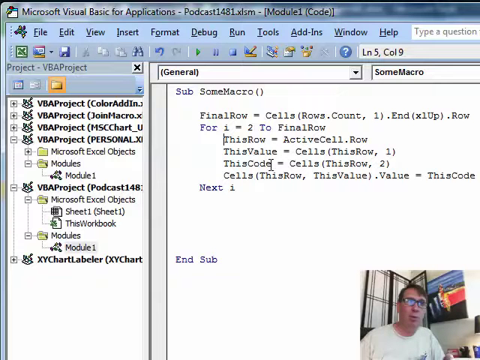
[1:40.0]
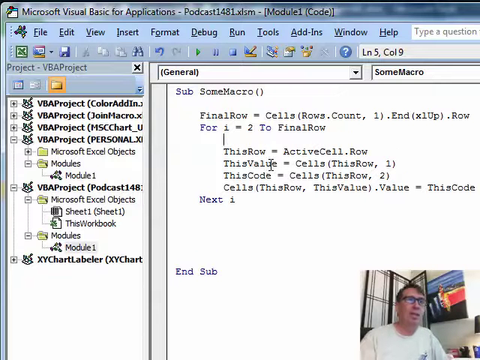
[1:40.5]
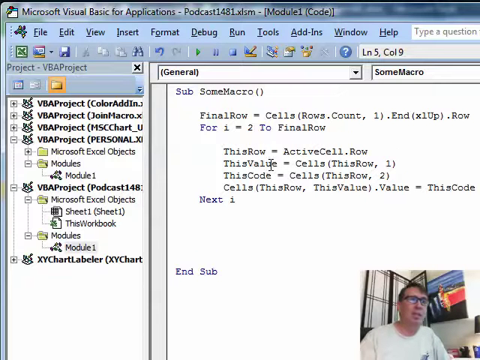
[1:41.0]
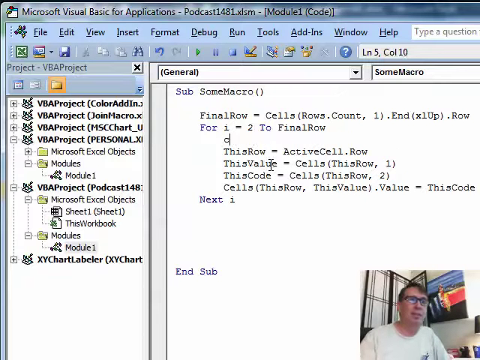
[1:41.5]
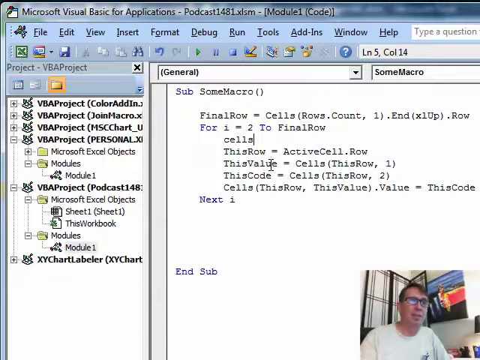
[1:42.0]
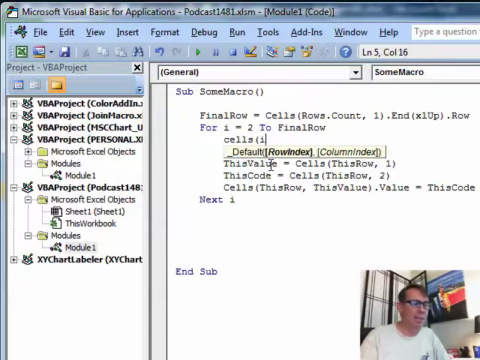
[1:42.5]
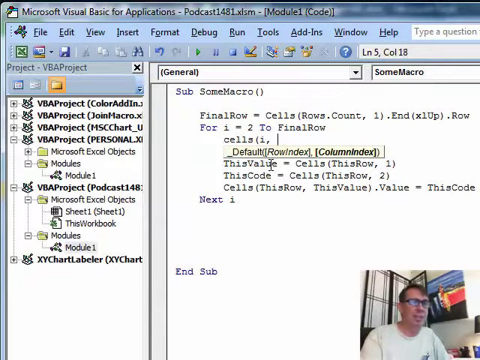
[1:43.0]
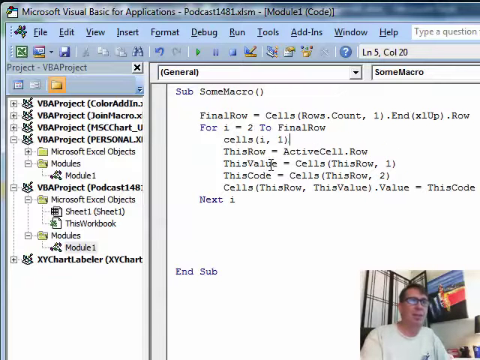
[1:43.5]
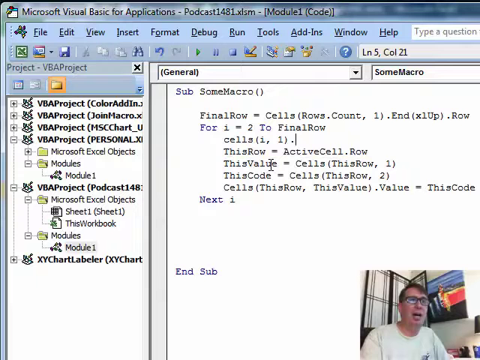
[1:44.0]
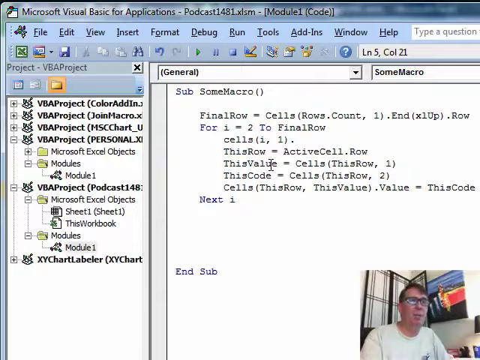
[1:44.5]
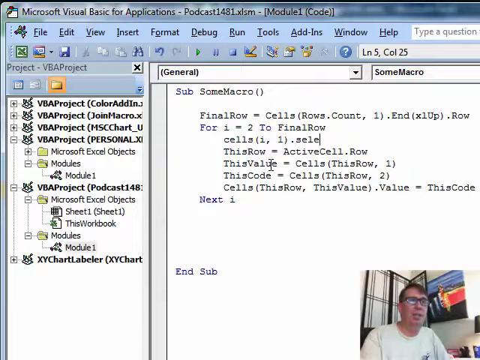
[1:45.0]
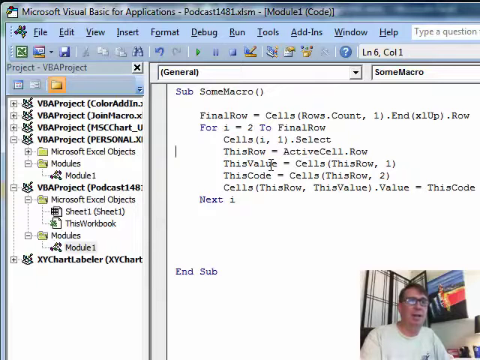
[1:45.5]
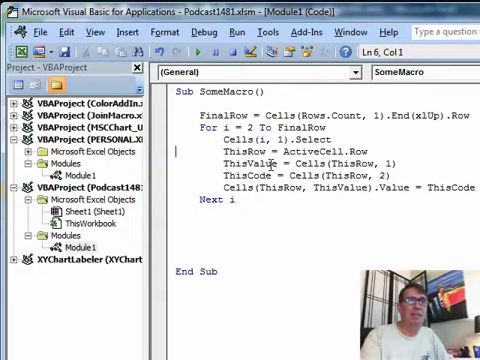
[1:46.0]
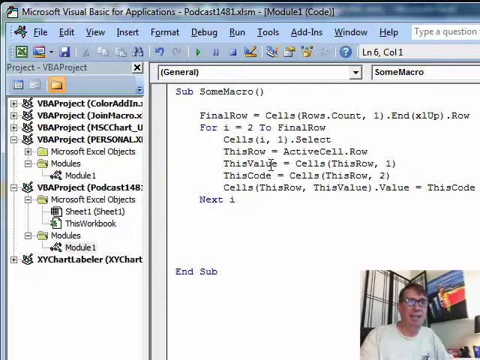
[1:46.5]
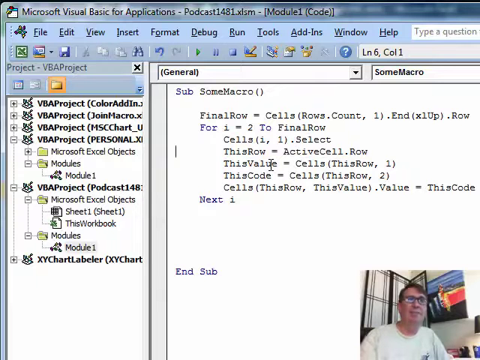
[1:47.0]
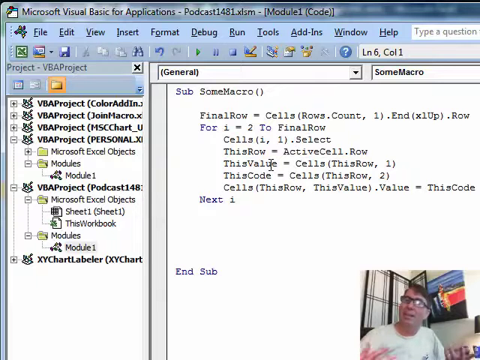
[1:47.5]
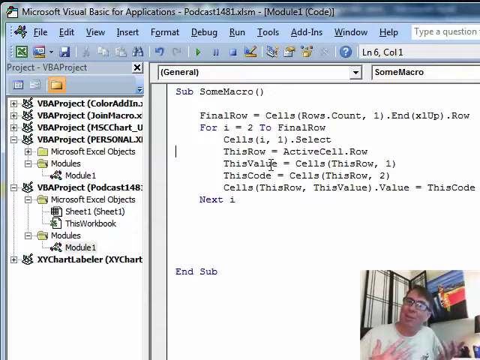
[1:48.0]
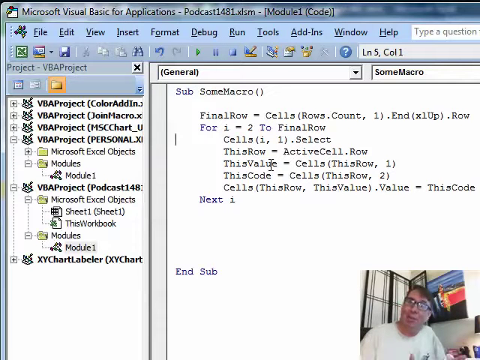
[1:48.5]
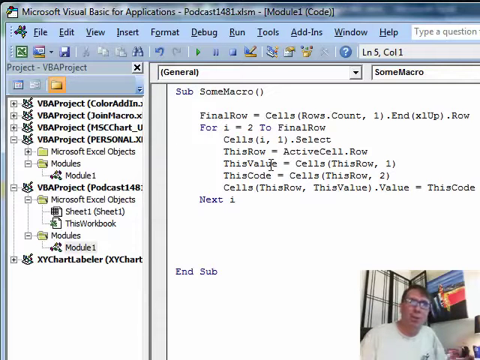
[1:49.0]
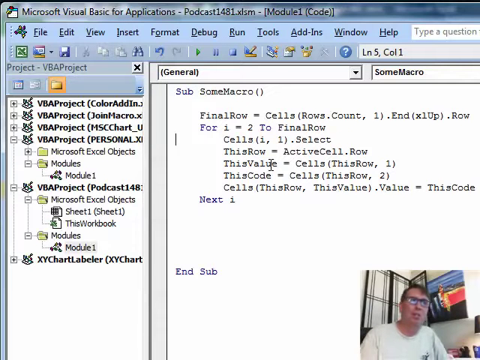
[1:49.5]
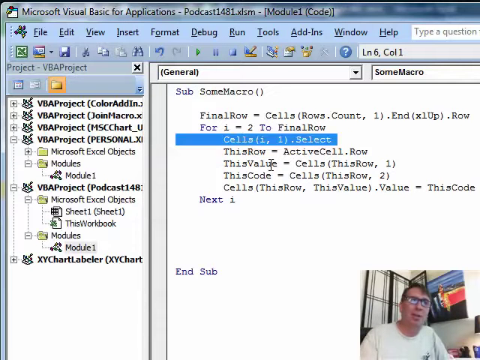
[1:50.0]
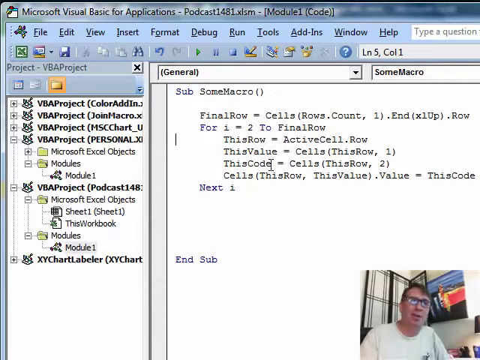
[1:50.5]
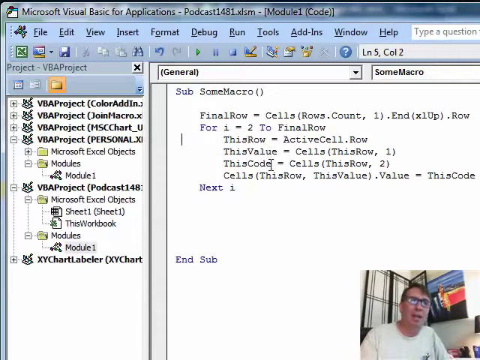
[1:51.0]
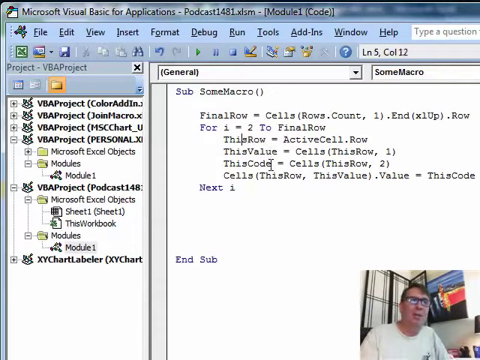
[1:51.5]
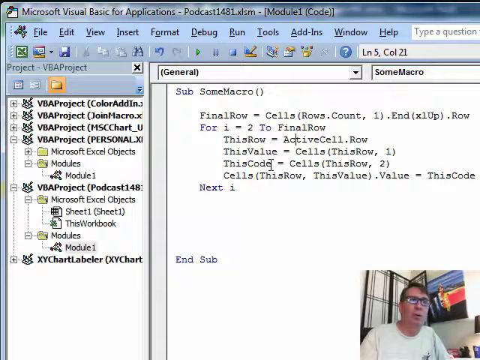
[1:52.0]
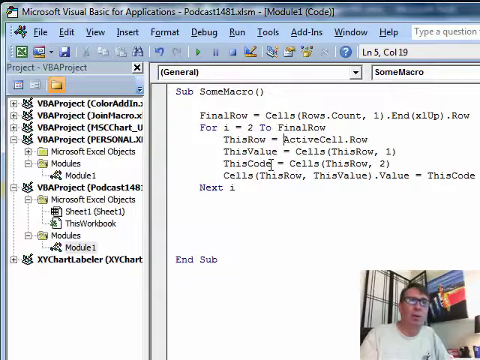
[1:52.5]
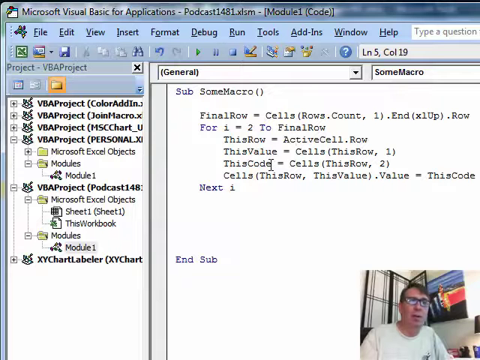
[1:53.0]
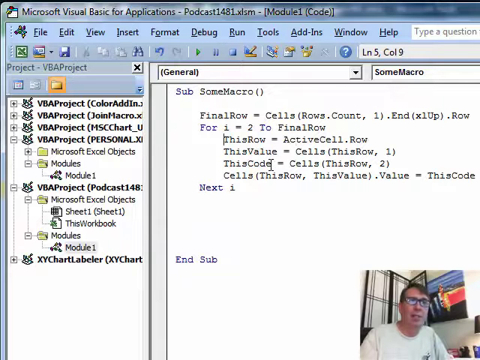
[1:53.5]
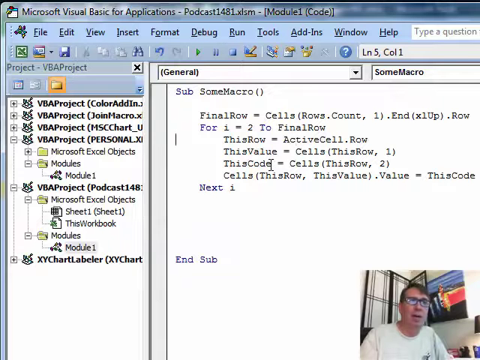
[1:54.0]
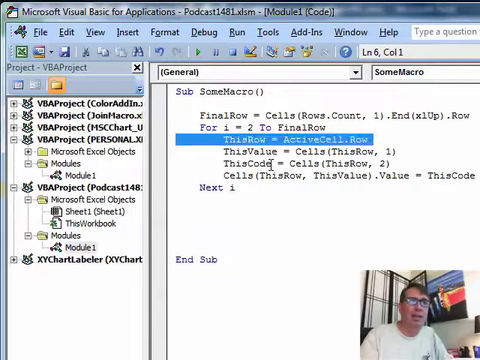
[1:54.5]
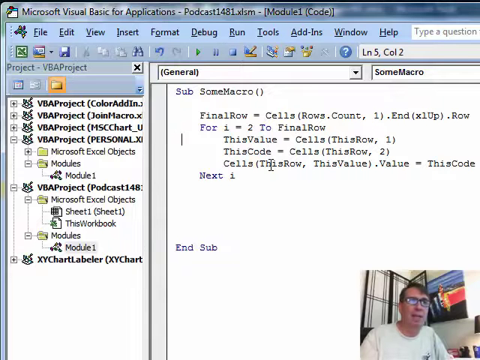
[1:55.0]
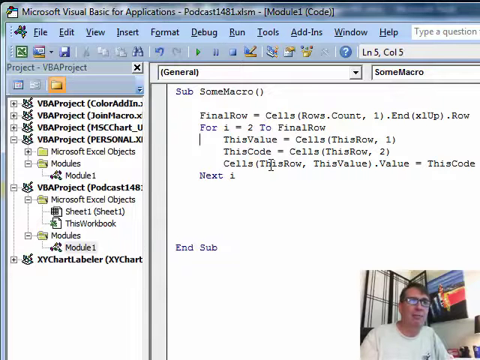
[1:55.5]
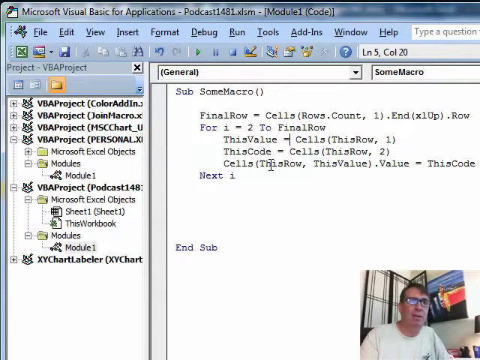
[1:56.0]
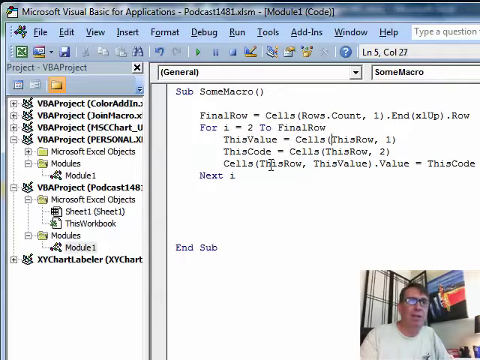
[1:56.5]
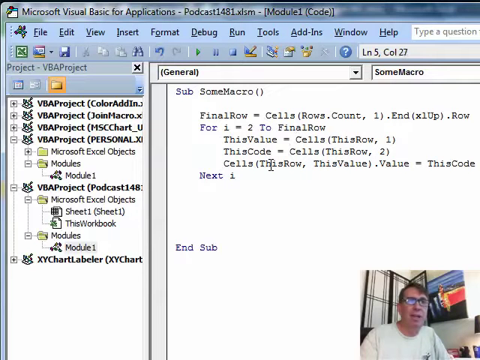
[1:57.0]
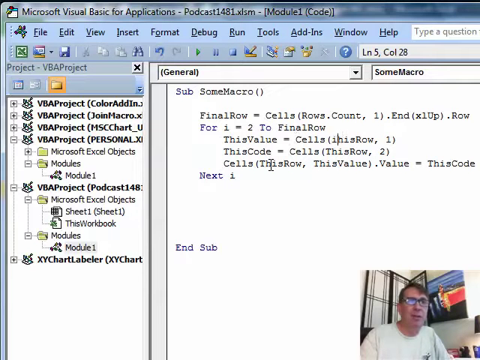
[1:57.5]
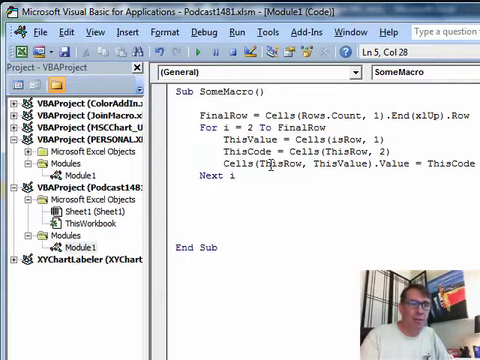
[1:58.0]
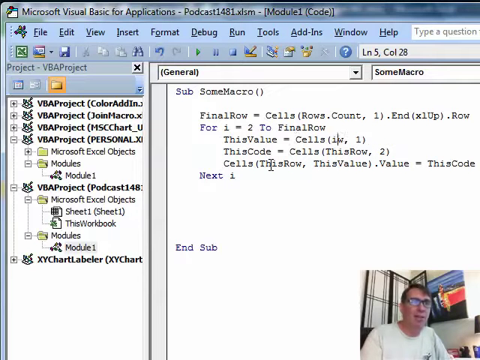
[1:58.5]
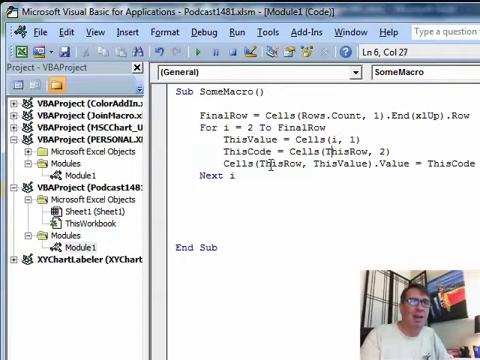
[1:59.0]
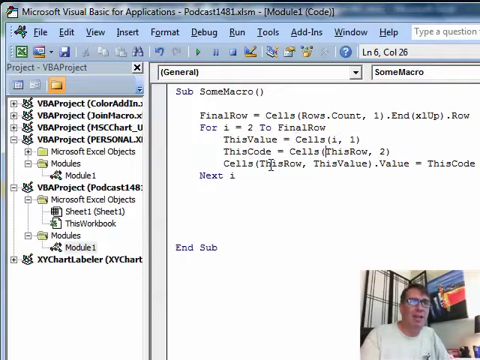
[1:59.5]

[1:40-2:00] The Visual Basic for Applications screen shows "podcast 1481, module 1" in the VBA project, with various things being typed on the screen. A picture-in-picture at the bottom right shows a white man with brown hair, black glasses and a white shirt. Behind him is a divider that is black with white on it, and a picture with blue, red and black. To the left, the view switches between screens. On the spreadsheet, the column and row are highlighted in yellow when he is on a particular cell. He keeps talking throughout, teaching how to use the spreadsheet. The cursor moves; column A has numbers and column B has letters. Then the view goes back to the VBA project screen.